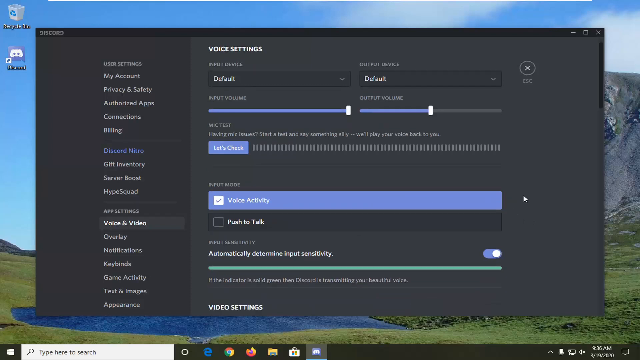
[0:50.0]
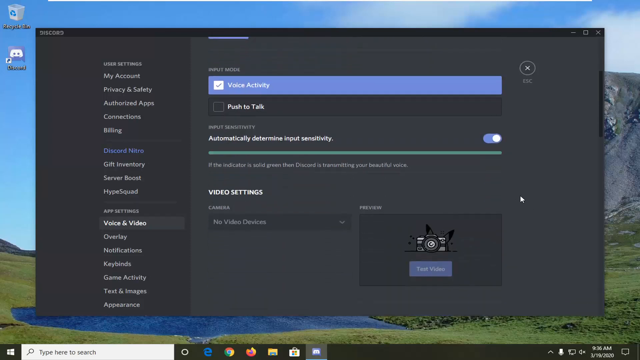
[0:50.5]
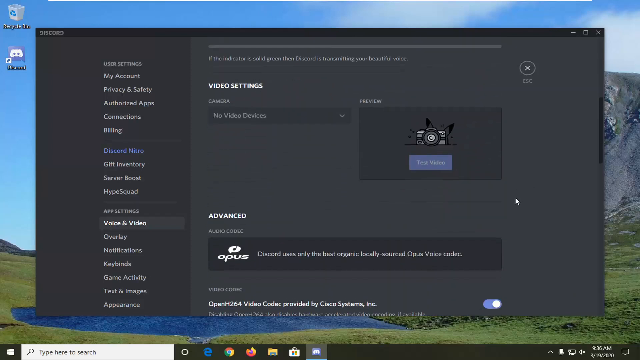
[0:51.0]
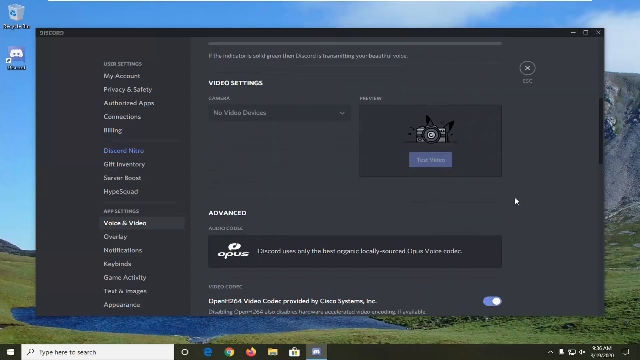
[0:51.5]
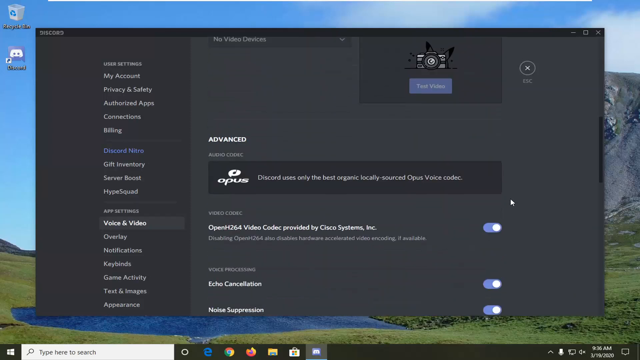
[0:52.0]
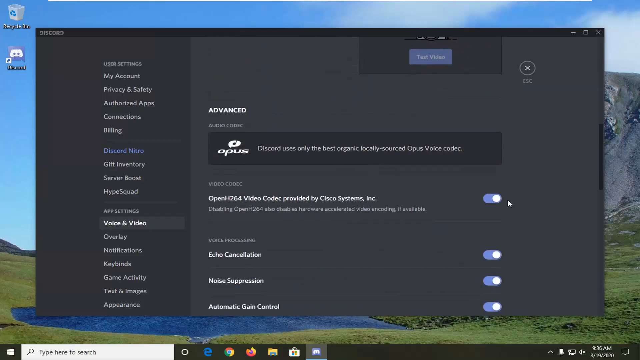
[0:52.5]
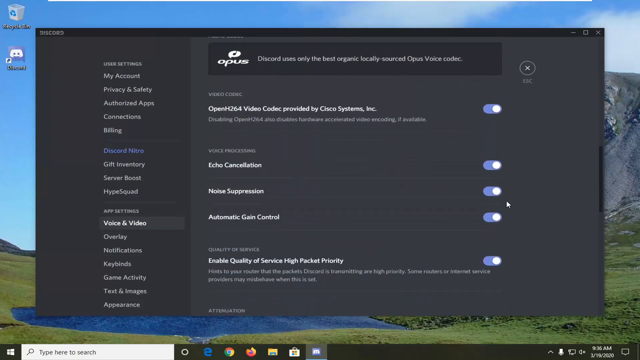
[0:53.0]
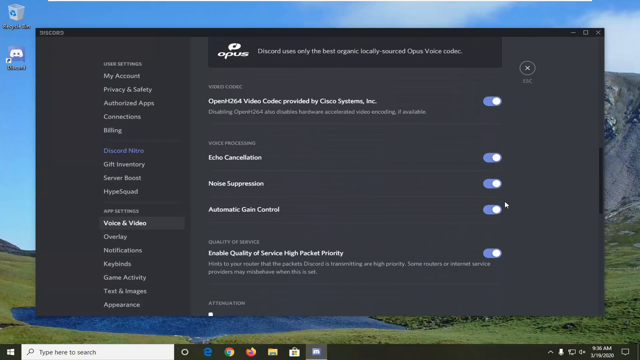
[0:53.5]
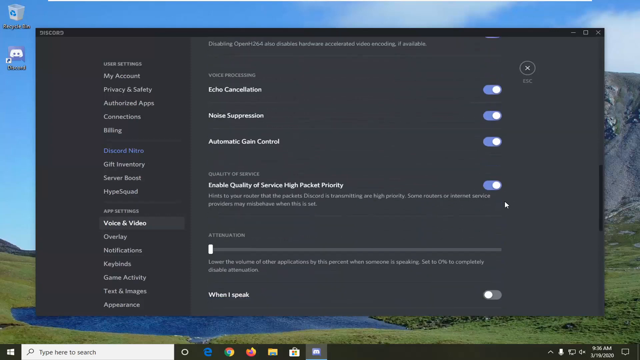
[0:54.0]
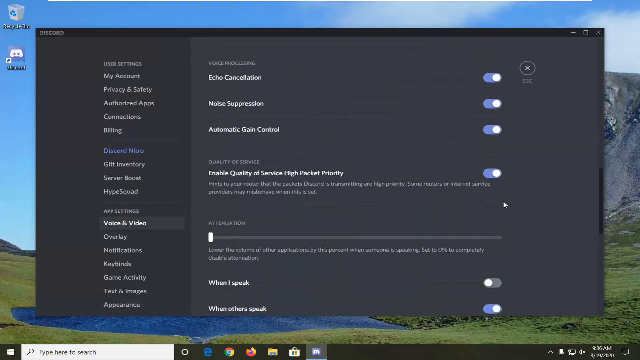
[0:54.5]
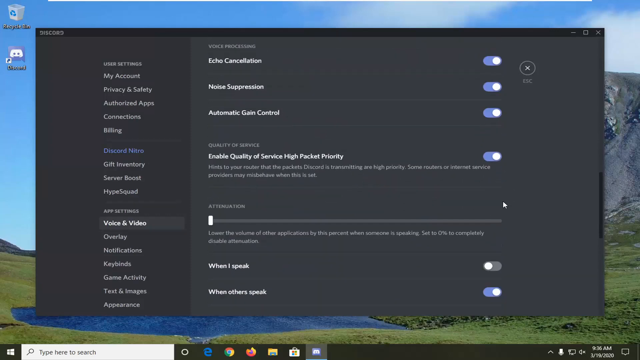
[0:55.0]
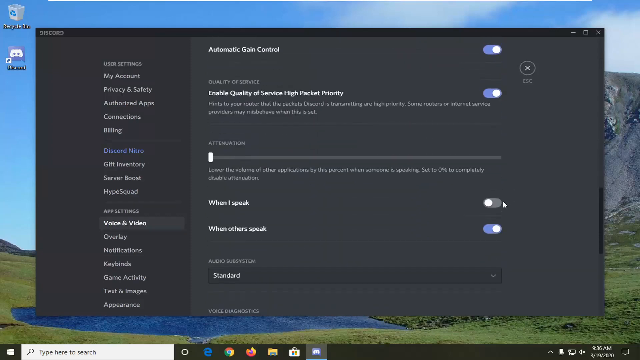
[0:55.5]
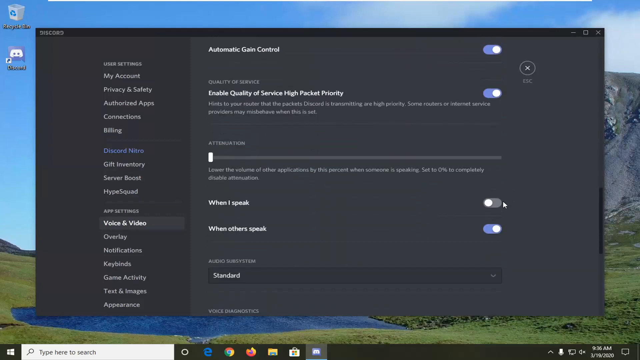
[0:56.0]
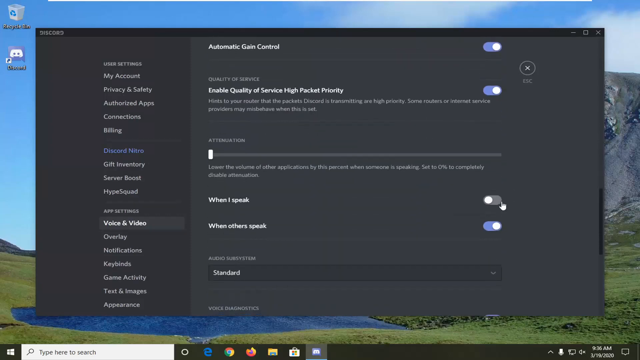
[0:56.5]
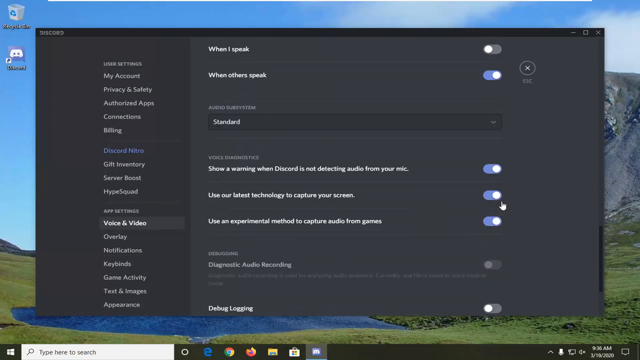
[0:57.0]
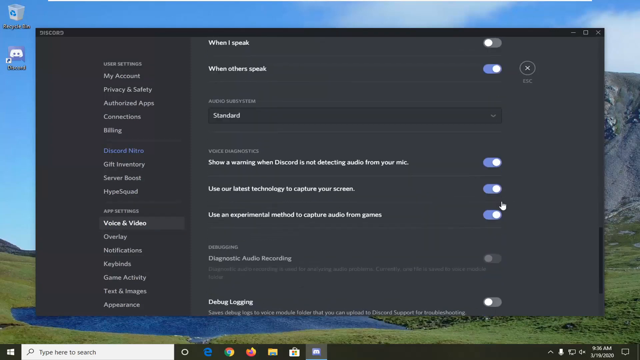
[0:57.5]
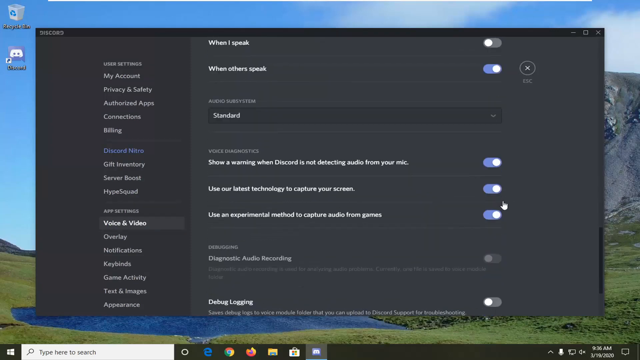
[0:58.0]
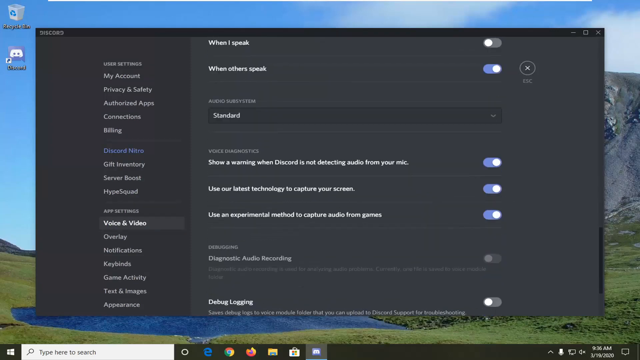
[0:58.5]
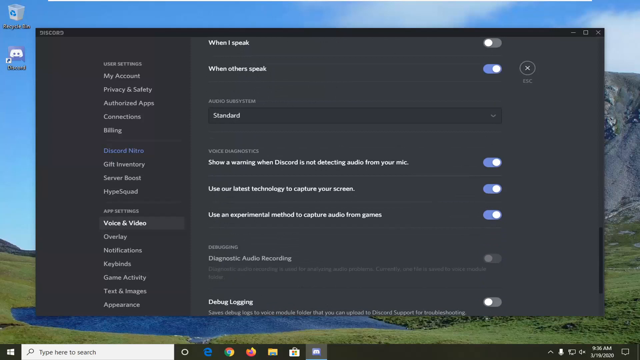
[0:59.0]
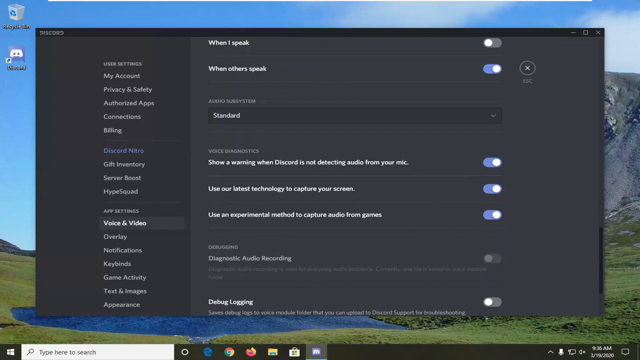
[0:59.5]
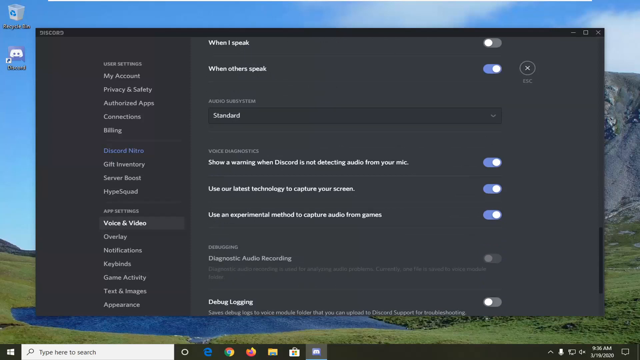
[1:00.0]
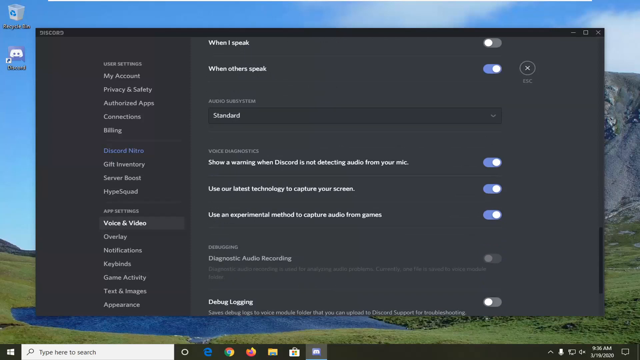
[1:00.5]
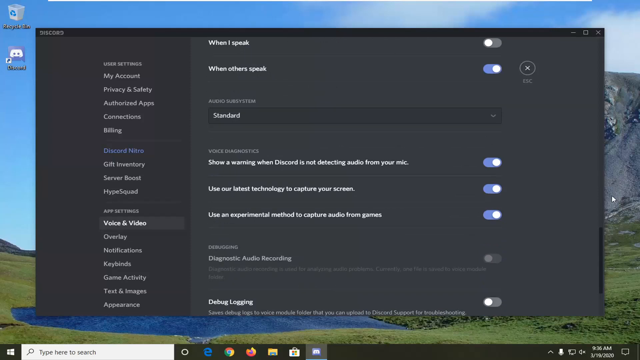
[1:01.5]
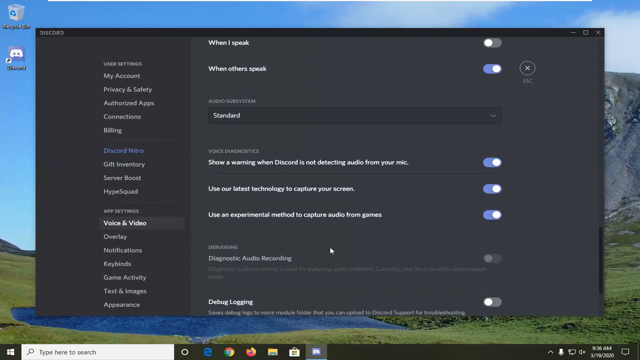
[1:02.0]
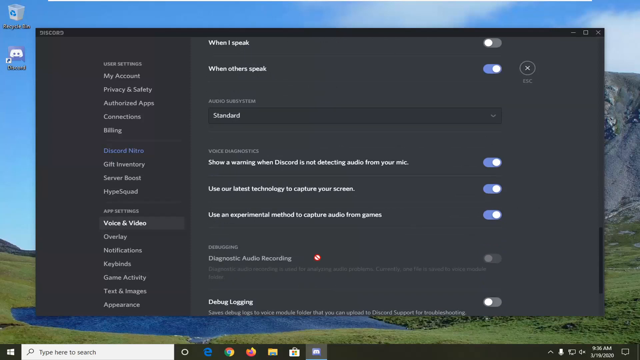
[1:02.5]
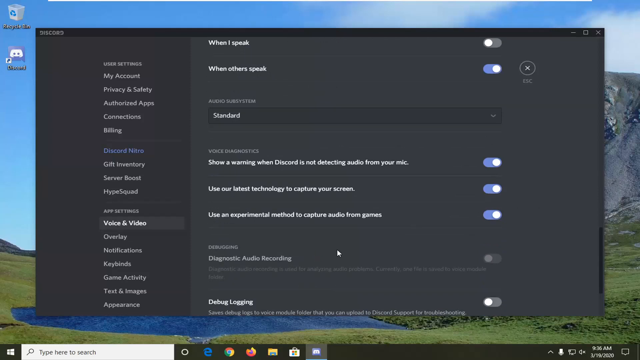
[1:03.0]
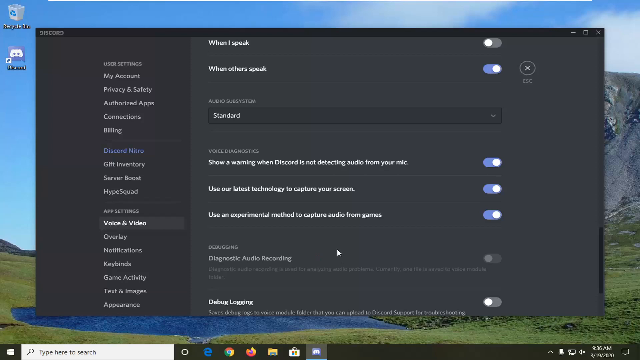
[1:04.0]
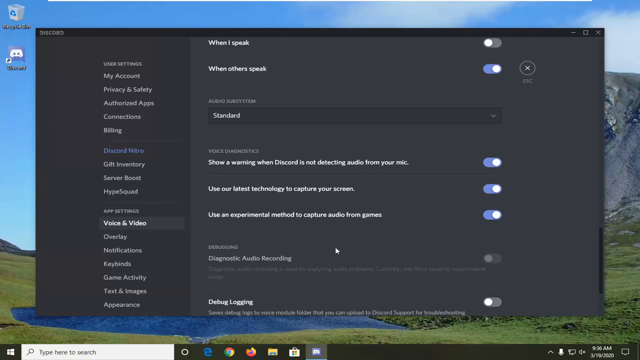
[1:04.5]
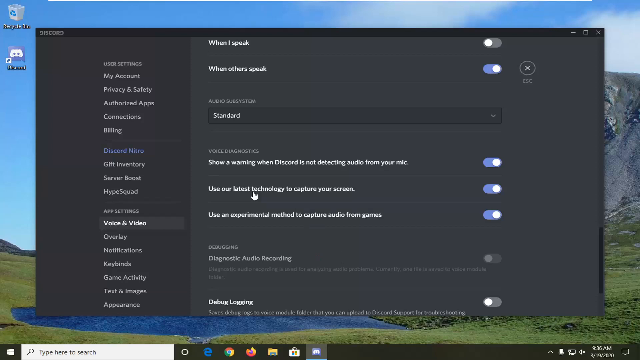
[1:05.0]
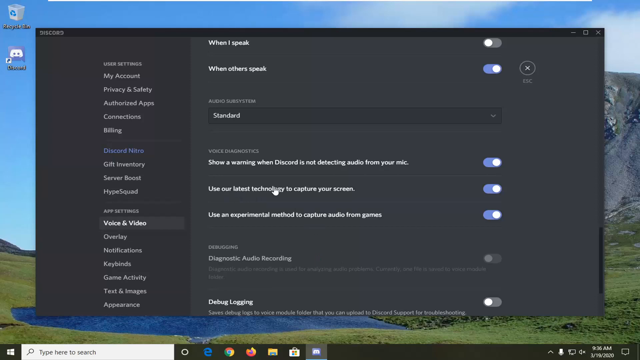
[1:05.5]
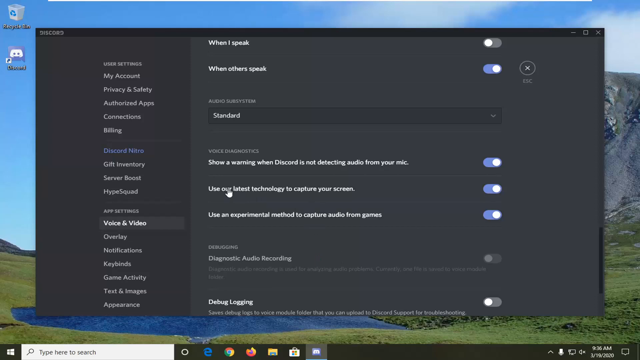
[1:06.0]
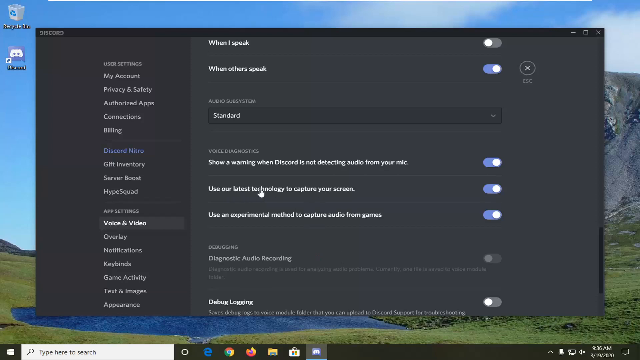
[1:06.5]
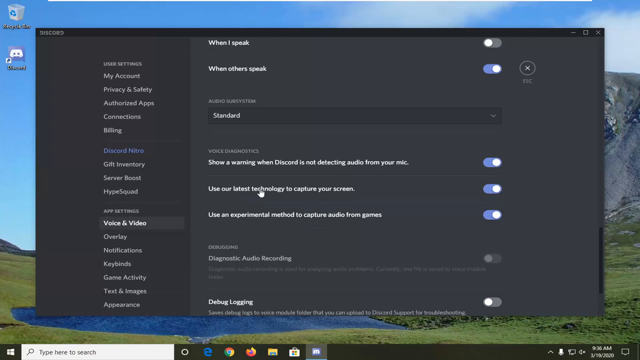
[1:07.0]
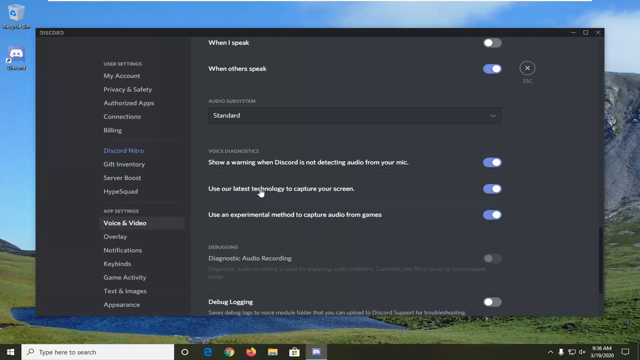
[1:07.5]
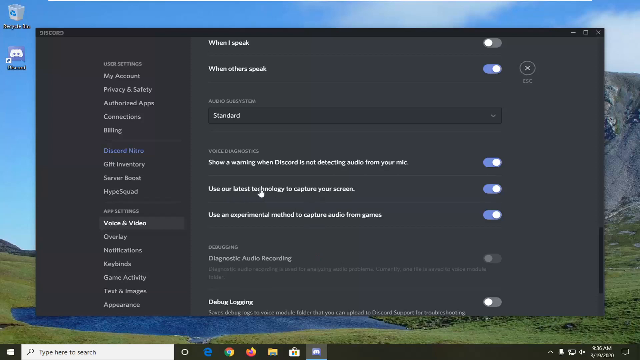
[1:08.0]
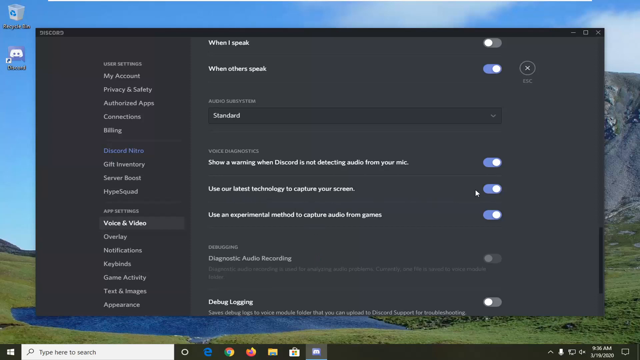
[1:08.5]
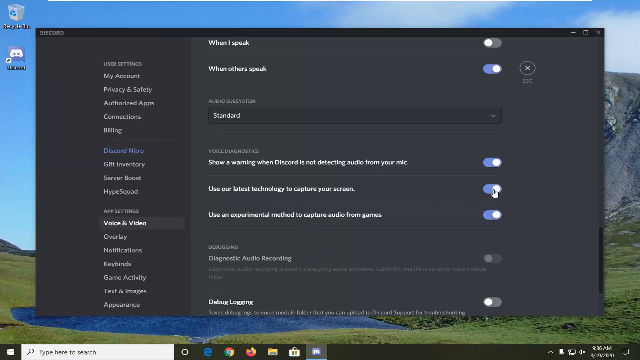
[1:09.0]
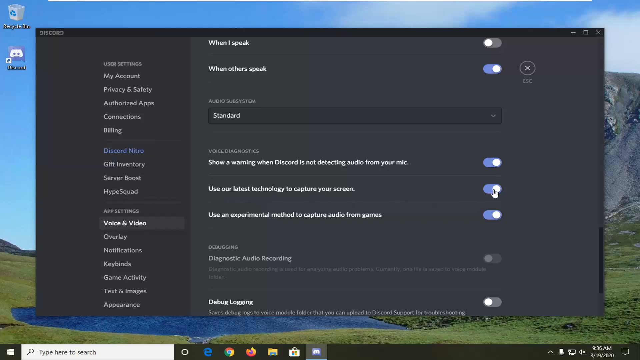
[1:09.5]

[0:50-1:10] The Discord app is open on the screen that says "Voice Activity." The view scrolls down past "Video Settings," then "Advanced," and keeps scrolling down. The mouse hovers around "Diagnostic Audio Recording," then the view moves up a little and shows "Use our latest technology to capture your screen." The mouse toggles this off. It then goes back to the Voice Activity screen and scrolls down again, and the process seems to repeat: the mouse hovers around the capture-your-screen option, appears about to toggle it off, but does not.